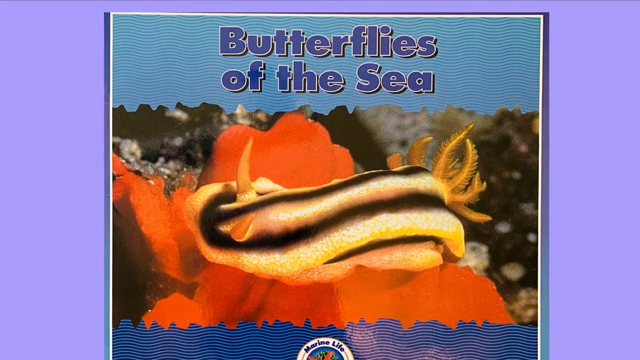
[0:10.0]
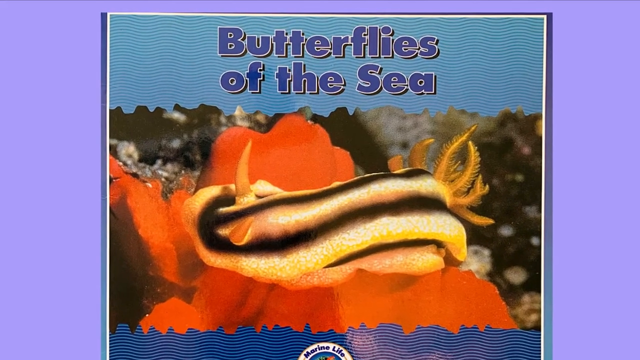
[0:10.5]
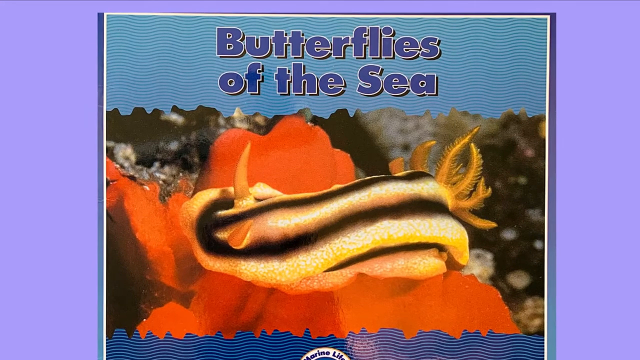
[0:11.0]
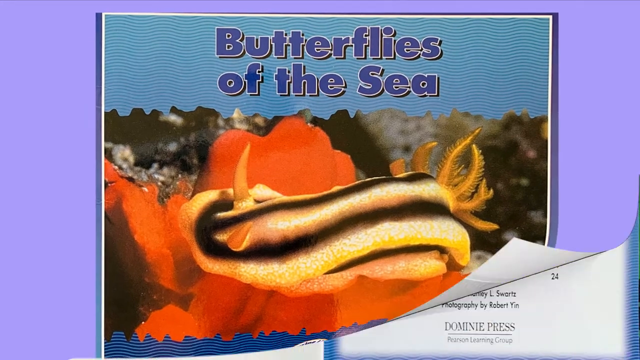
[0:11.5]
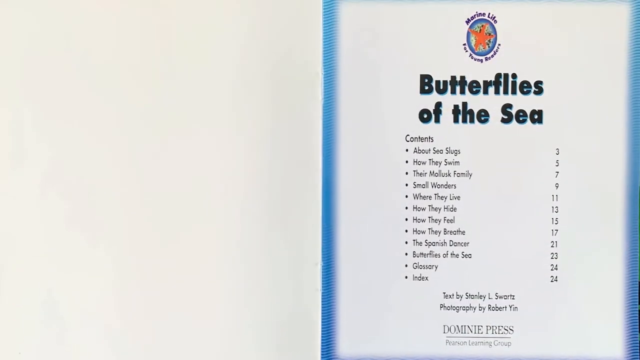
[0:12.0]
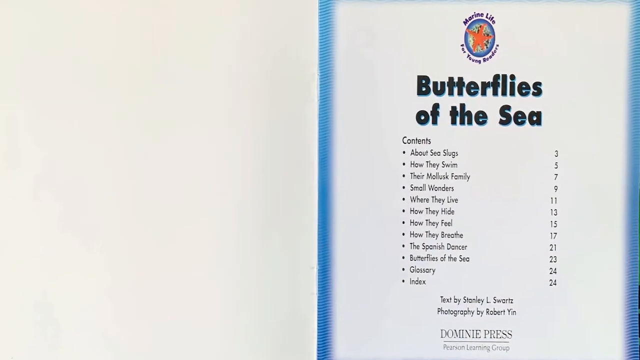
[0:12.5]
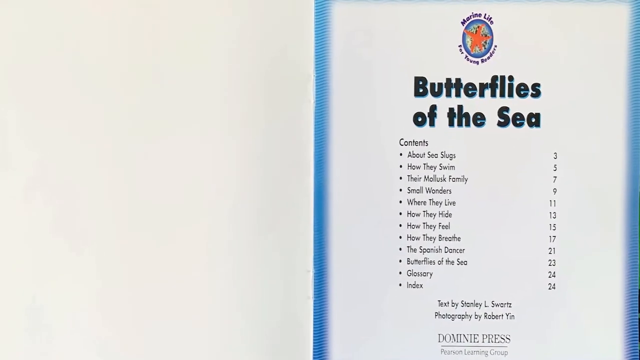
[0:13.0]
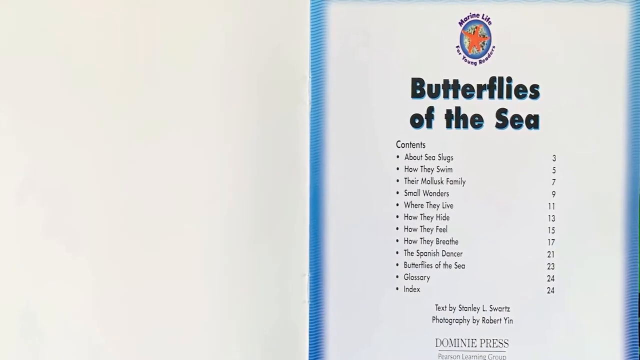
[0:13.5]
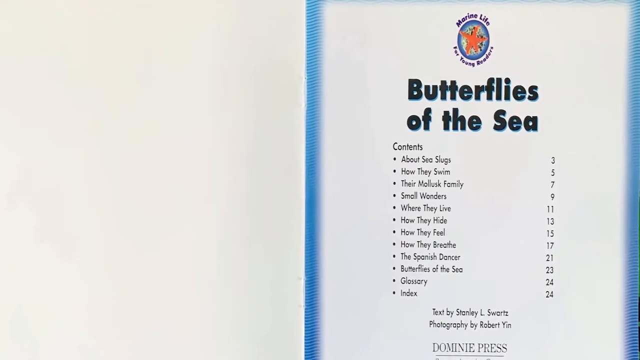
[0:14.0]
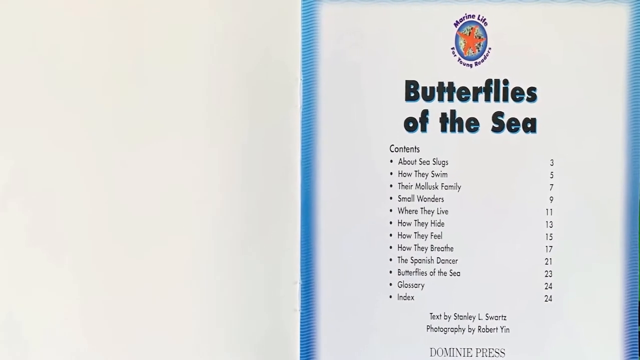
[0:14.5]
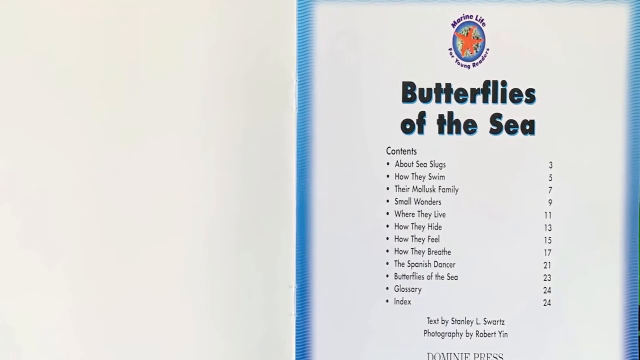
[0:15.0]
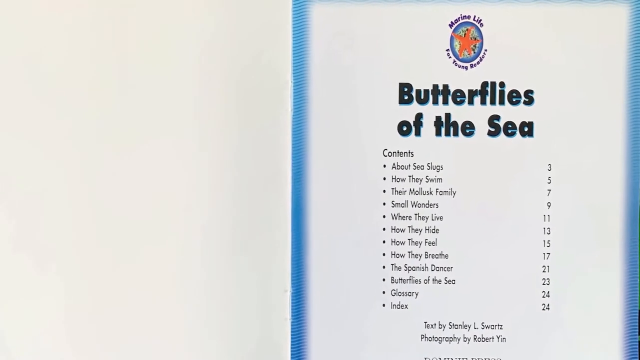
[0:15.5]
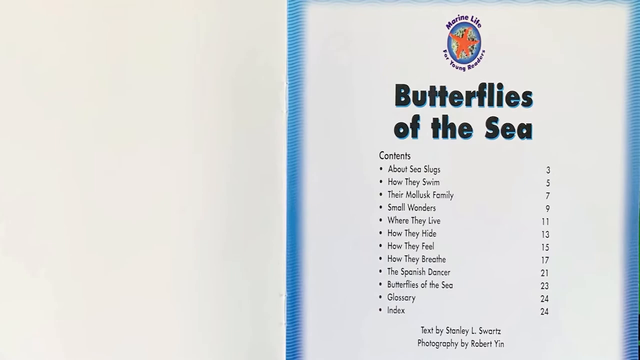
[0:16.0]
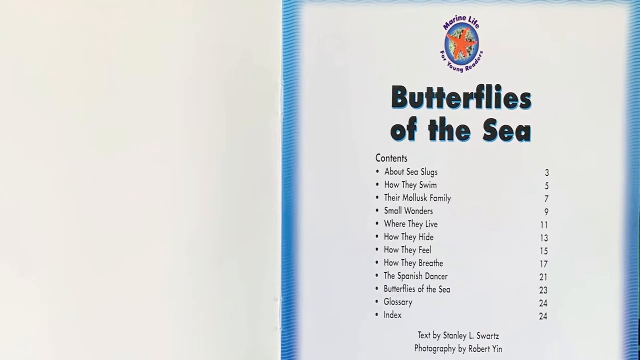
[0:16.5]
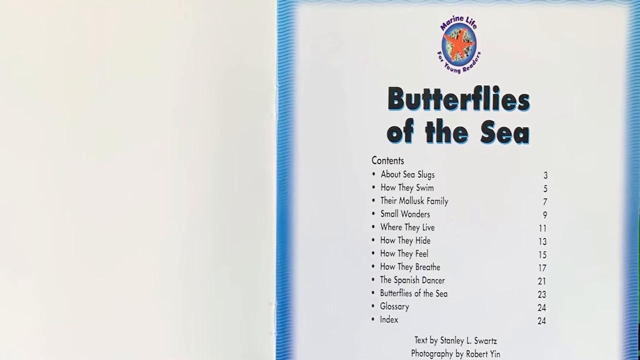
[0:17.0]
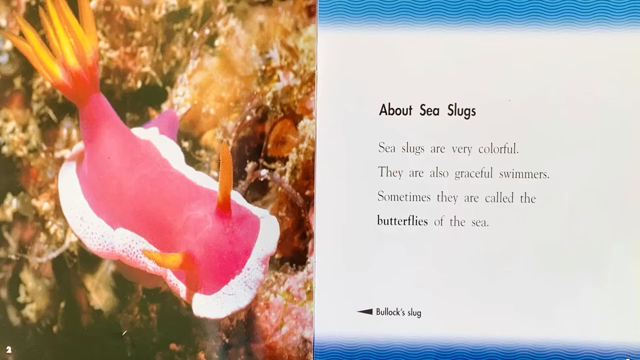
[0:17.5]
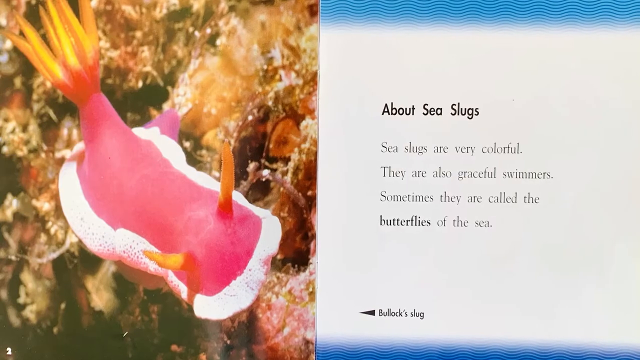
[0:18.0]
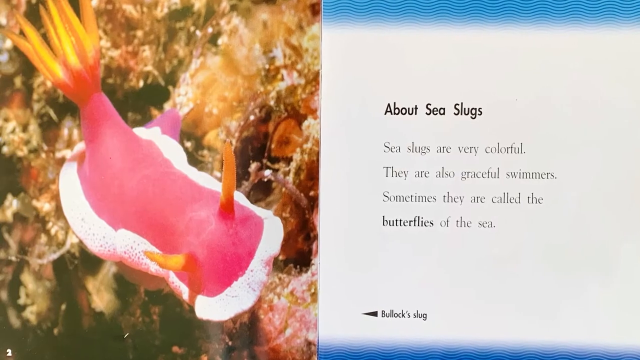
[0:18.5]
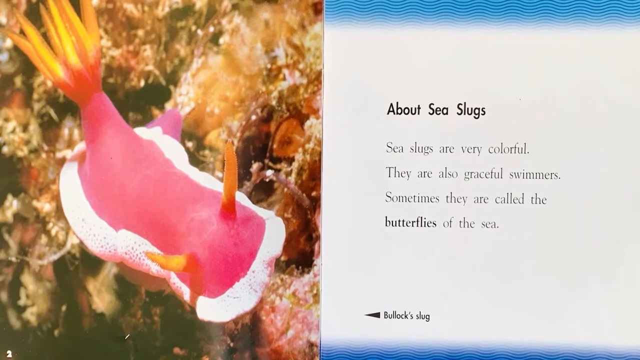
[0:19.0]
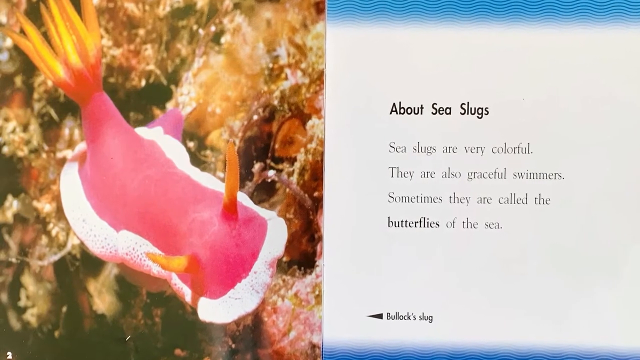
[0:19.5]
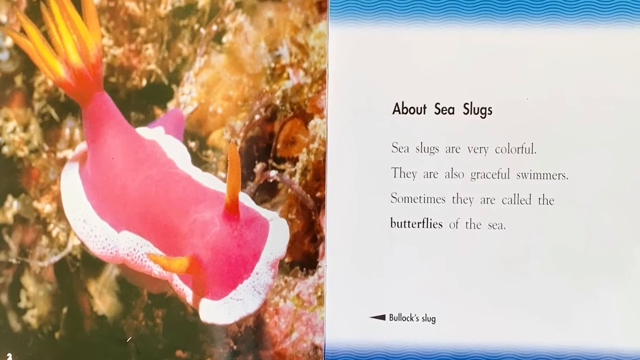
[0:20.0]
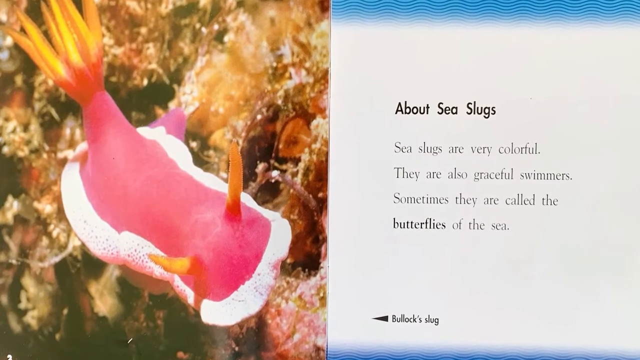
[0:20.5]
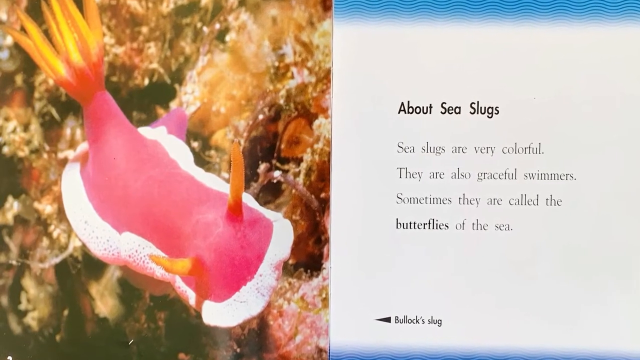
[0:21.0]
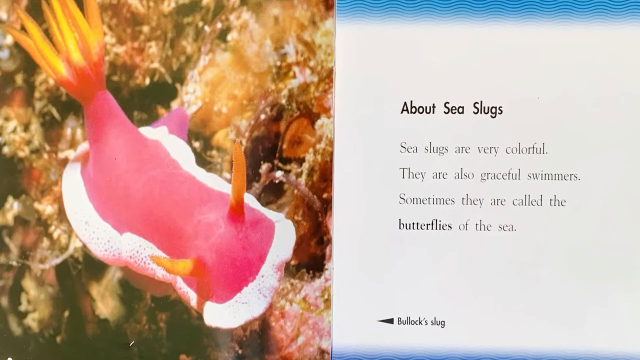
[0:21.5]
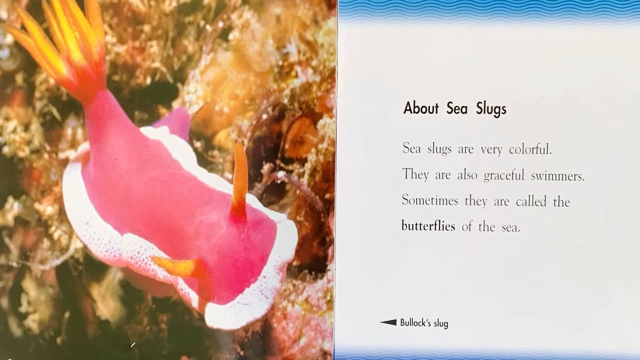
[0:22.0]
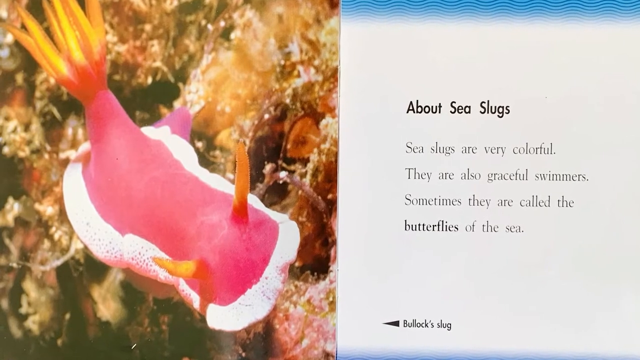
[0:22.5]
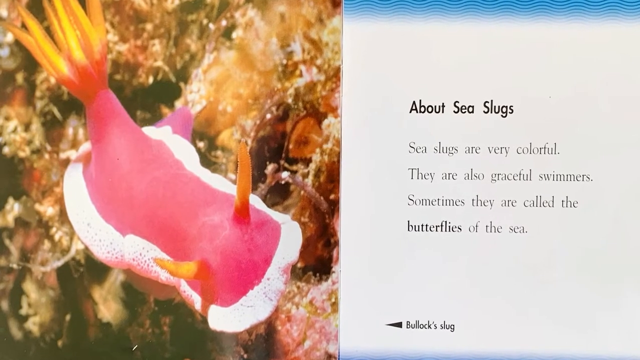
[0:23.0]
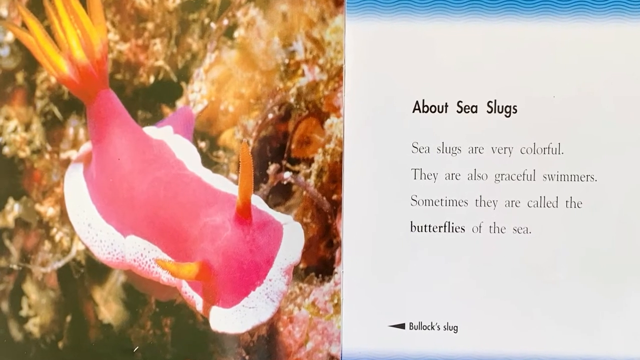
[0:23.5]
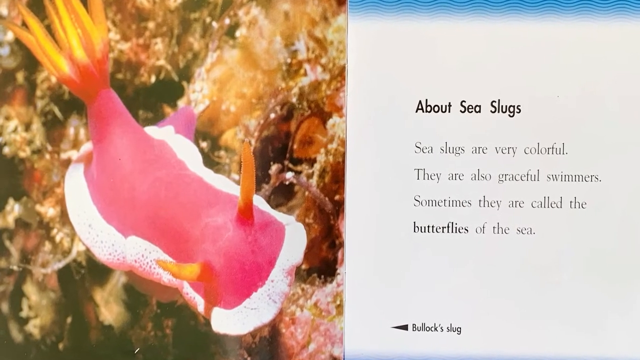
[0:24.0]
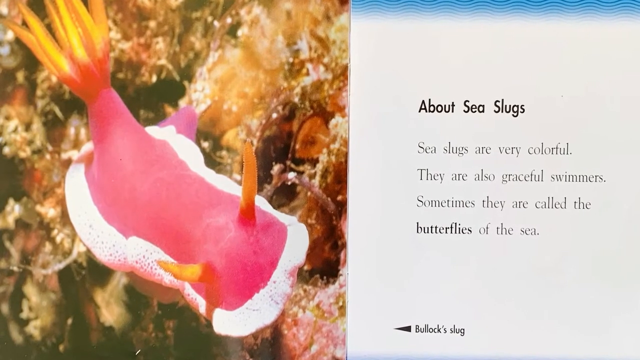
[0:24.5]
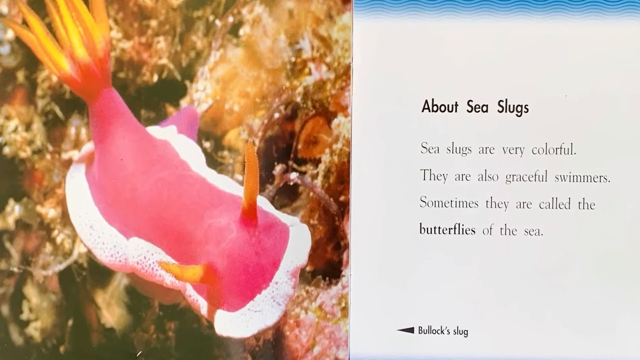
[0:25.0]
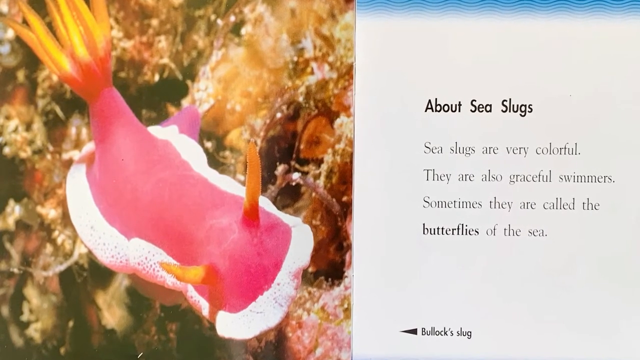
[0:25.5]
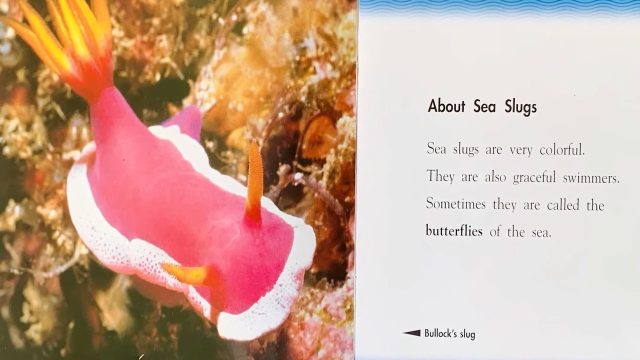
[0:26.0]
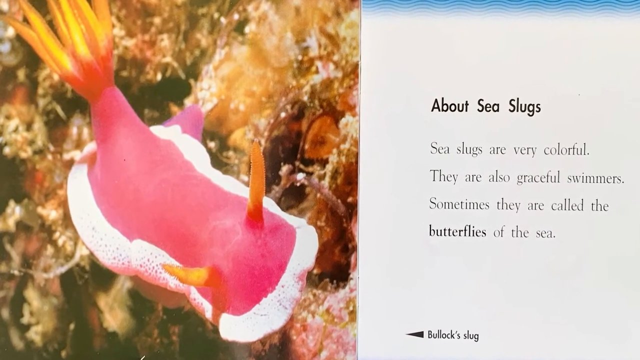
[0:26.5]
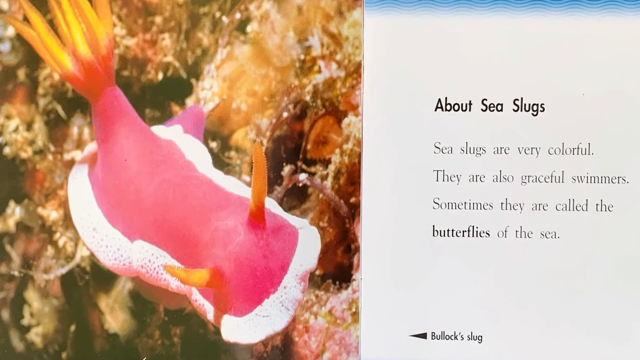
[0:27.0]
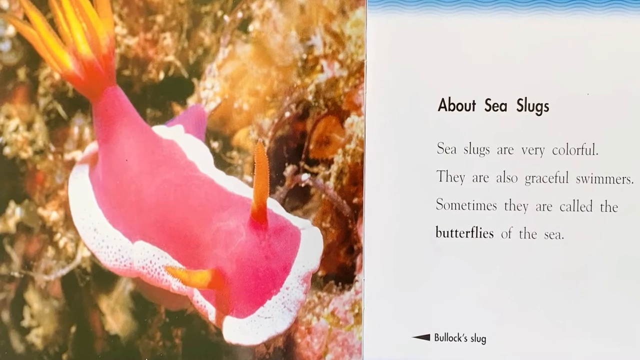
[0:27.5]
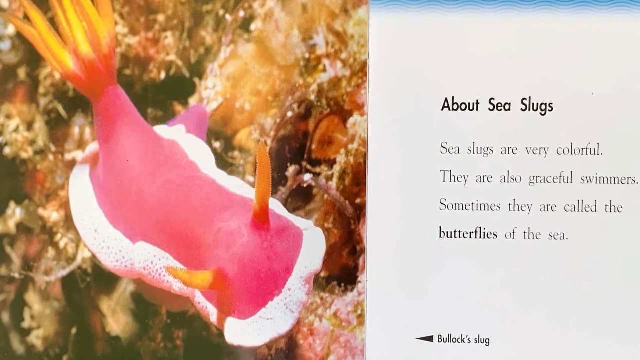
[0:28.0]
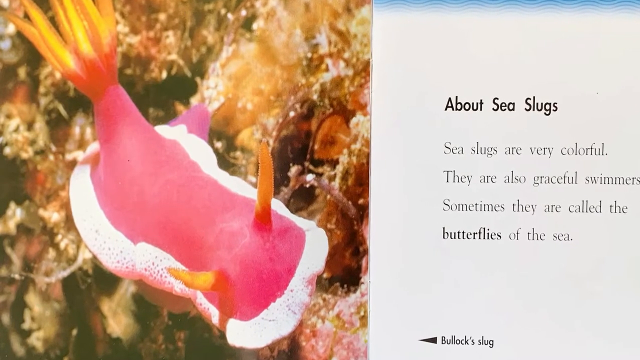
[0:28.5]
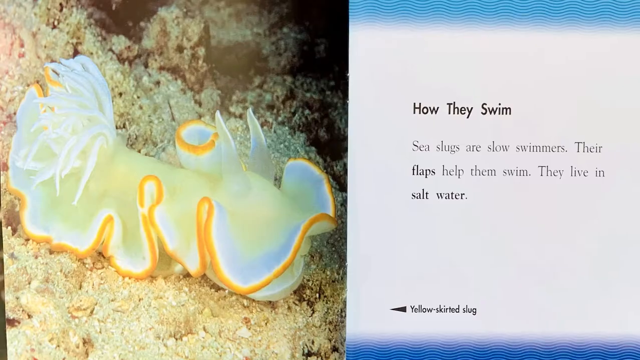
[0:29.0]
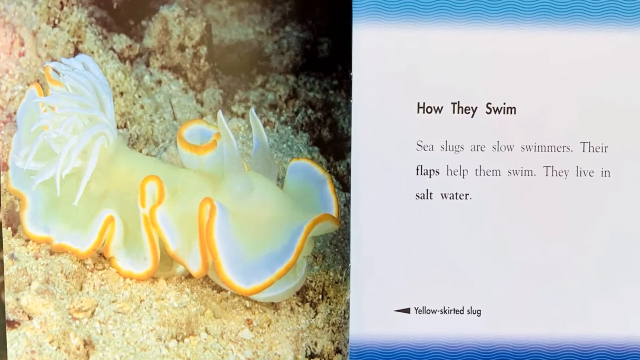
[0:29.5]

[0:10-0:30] A book cover takes up most of the screen, in the middle of a light lavender background. A light blue border at the top holds large dark blue letters reading "butterflies of the sea," and there is a dark blue border at the very bottom. Between the borders is a large image of a yellow animal that looks like a sea slug, with a long, thick yellow body and two thick black stripes down its back. It sits on a reddish orange plant at the bottom of the ocean, and it appears to have two light orange horns coming out of its head. The screen then changes to what looks like the book's table of contents: a white page with the title "Butterflies of the Sea" at the top, the word "Contents" beneath it in smaller black font, bullet points listing the chapters, and page numbers on the right side. Next comes what looks like a page spread. On the left is a photo of a pink, rectangular-looking sea animal that looks somewhat like a large slug, with yellow horns on top of its head and a tail of long, thin yellow tails bunched up and sticking out. On the right, on a white page, a black heading near the center reads "About Sea Slugs," followed by "Sea Slugs are very colorful. They are also graceful swimmers. Sometimes they are called the Butterflies of the Sea." At the bottom of the page, a black arrowhead points to the image on the left, next to the label "Bollocks Slug." Another spread follows. On the left is an image of a large, light yellow slug whose body seems to have a frilly fringe at the ends that drags on the floor, two transparent yellow horns sticking out of its head, and a long, thick, white stringy tail. On the right, a white page has the bold black heading "how they swim" at the top and, in slightly smaller, less bold font, "sea slugs are slow swimmers. Their flaps help them swim. They live in salt water." At the bottom left of the page, a black arrowhead points to the image on the left, next to the label "yellow skirted slug."